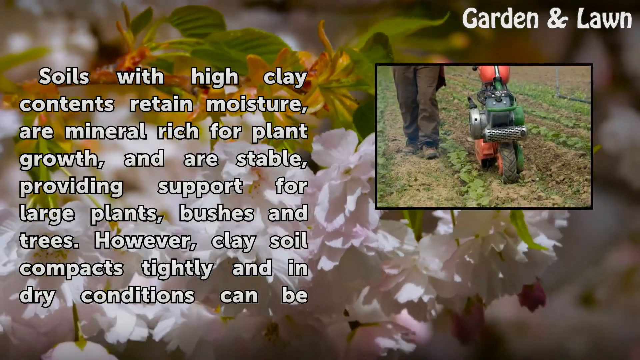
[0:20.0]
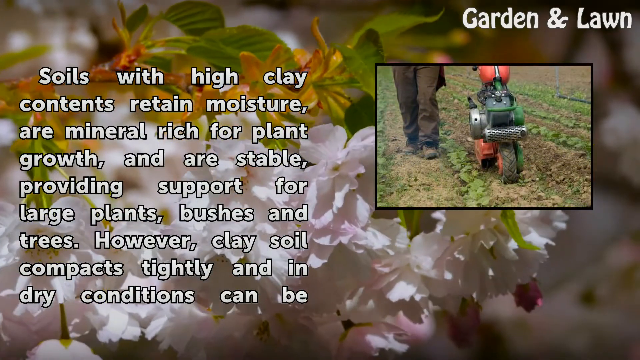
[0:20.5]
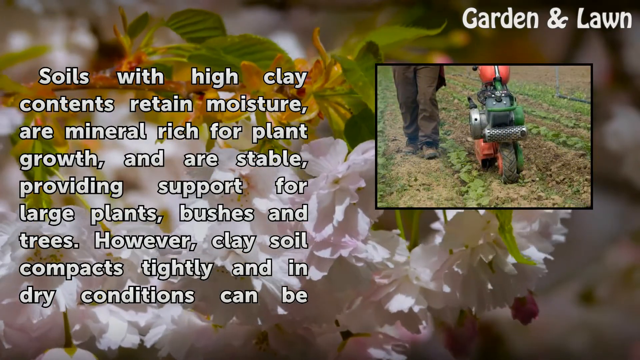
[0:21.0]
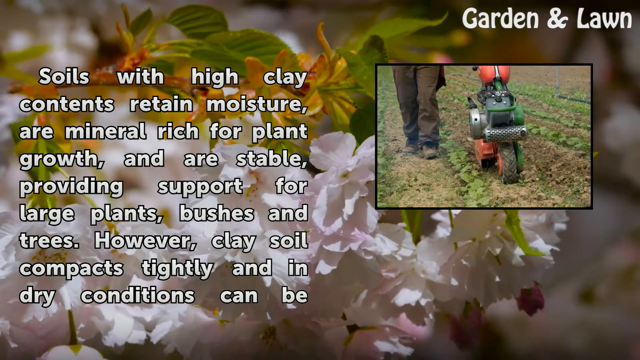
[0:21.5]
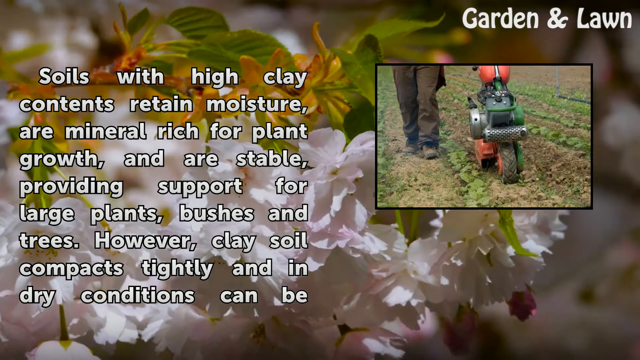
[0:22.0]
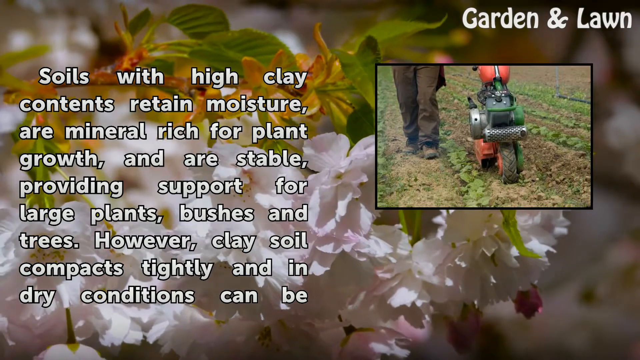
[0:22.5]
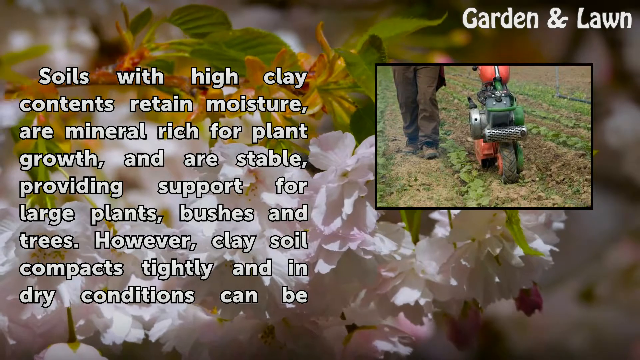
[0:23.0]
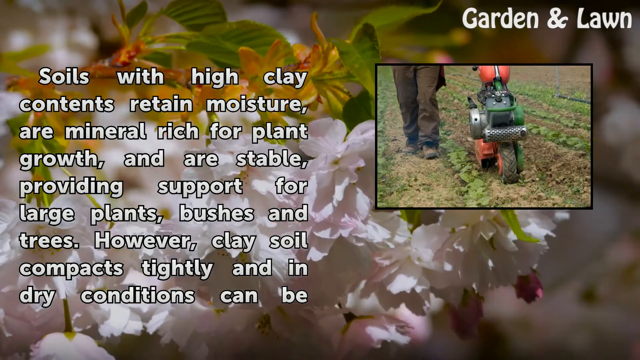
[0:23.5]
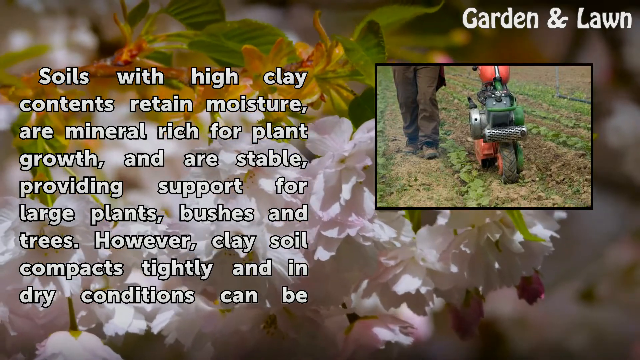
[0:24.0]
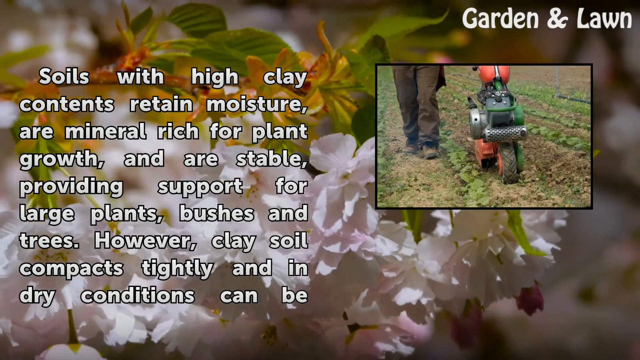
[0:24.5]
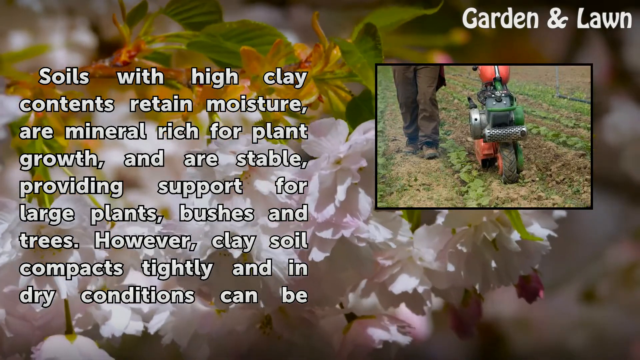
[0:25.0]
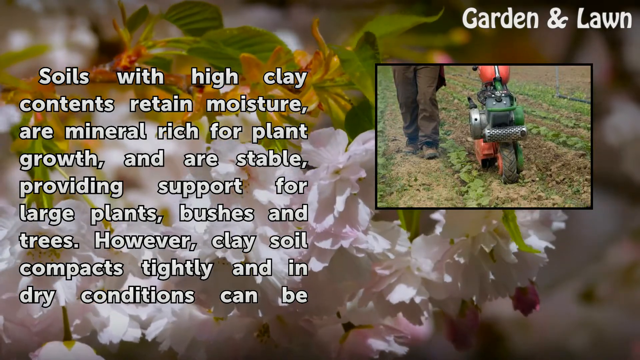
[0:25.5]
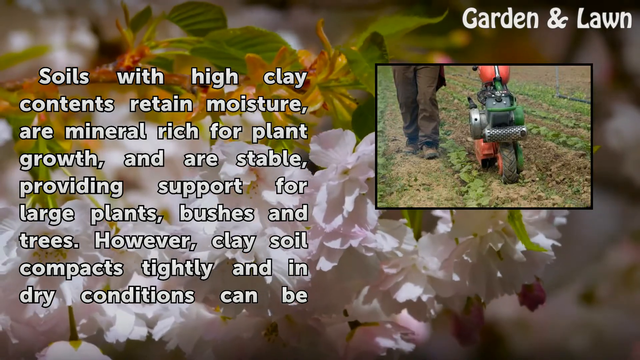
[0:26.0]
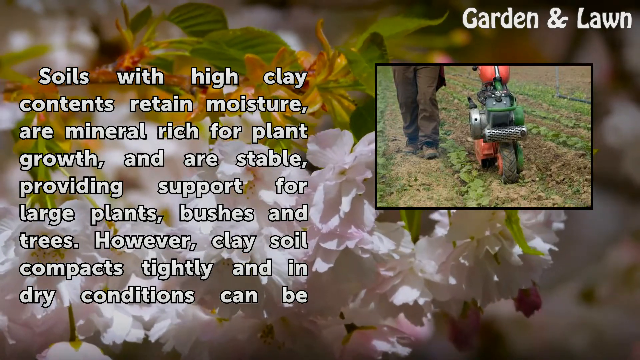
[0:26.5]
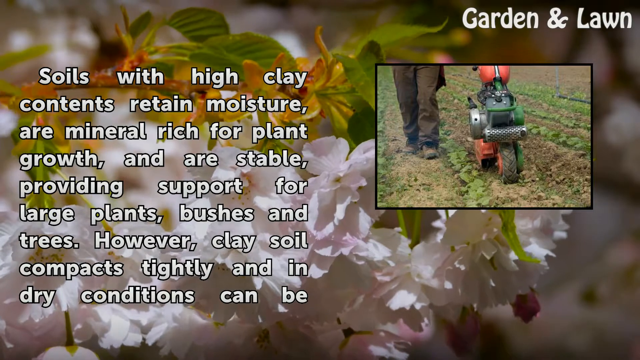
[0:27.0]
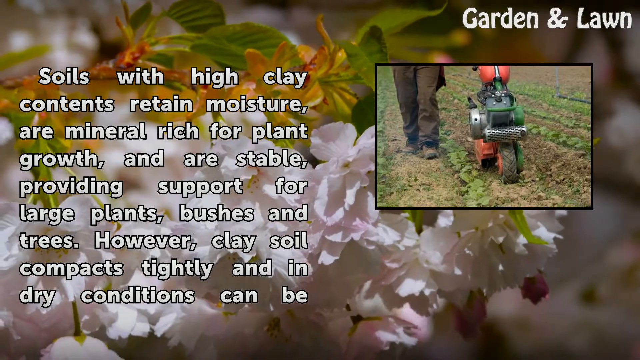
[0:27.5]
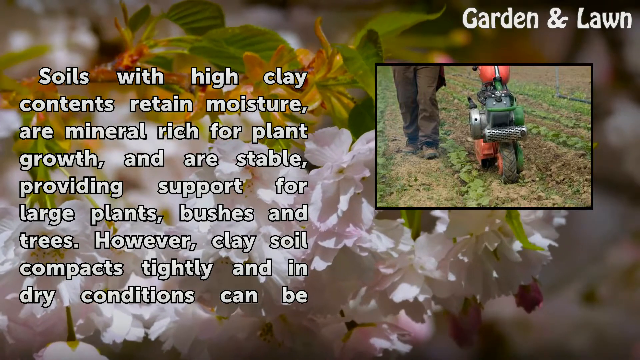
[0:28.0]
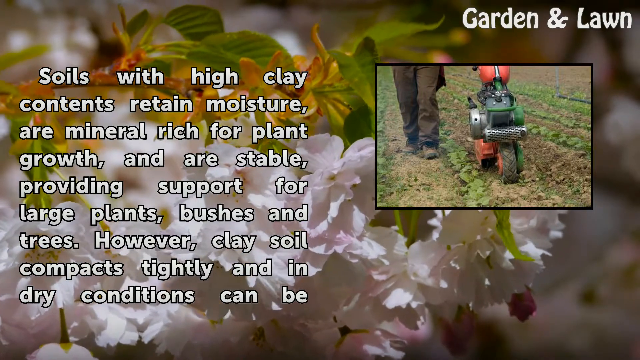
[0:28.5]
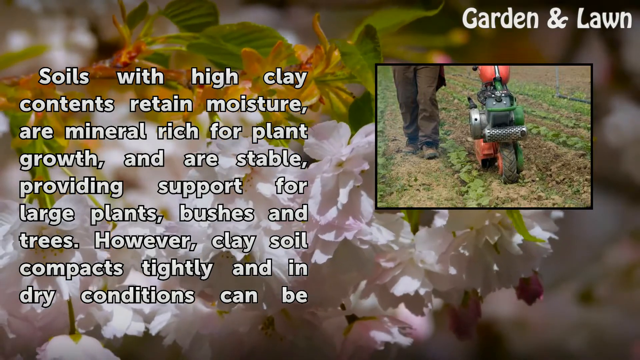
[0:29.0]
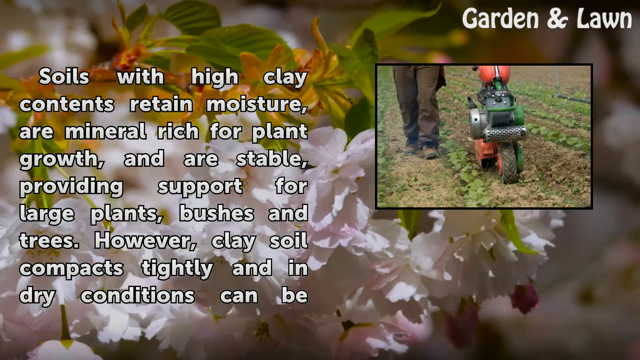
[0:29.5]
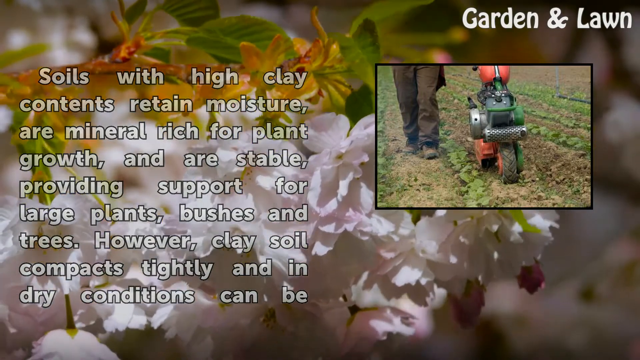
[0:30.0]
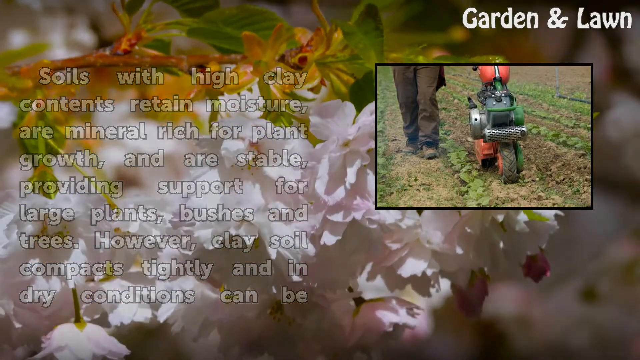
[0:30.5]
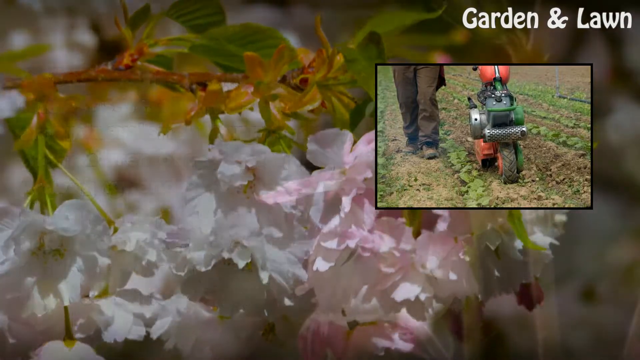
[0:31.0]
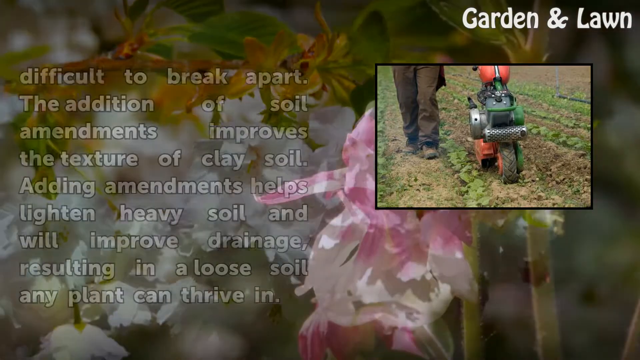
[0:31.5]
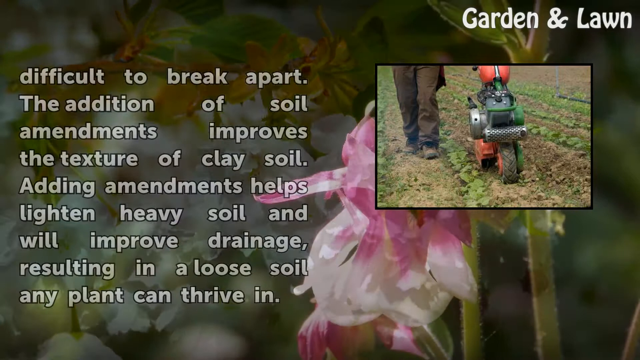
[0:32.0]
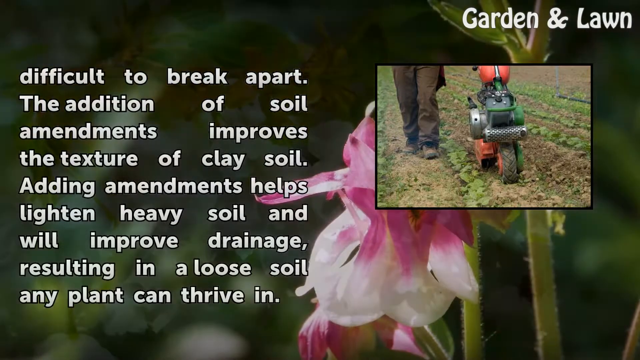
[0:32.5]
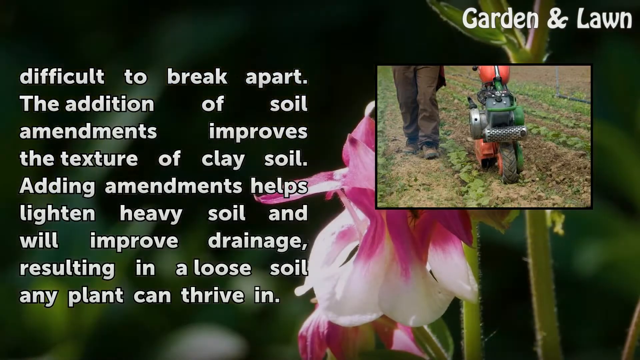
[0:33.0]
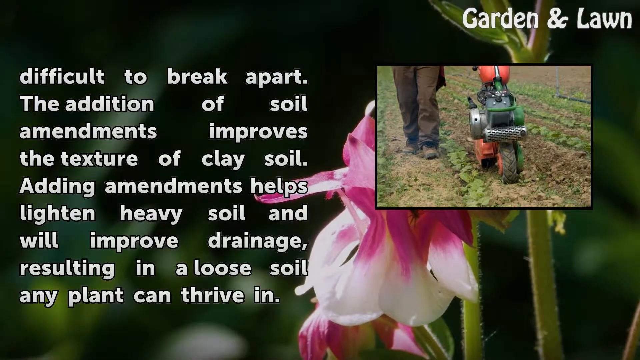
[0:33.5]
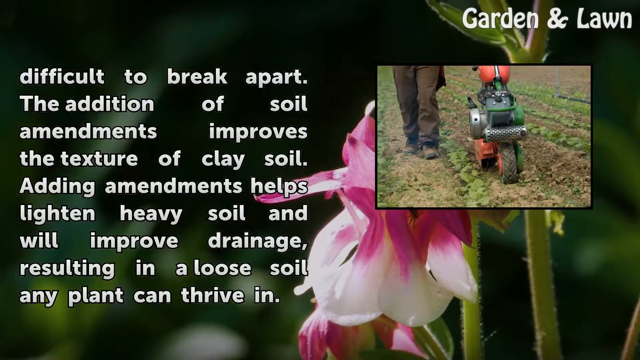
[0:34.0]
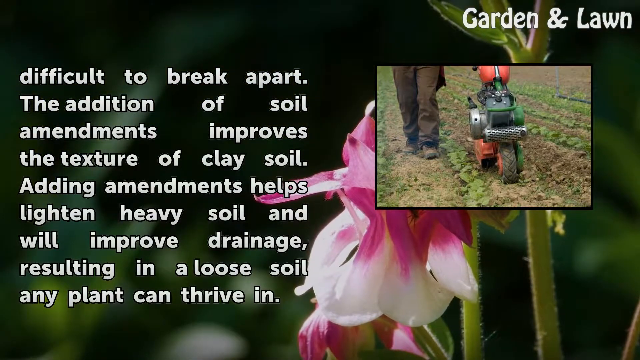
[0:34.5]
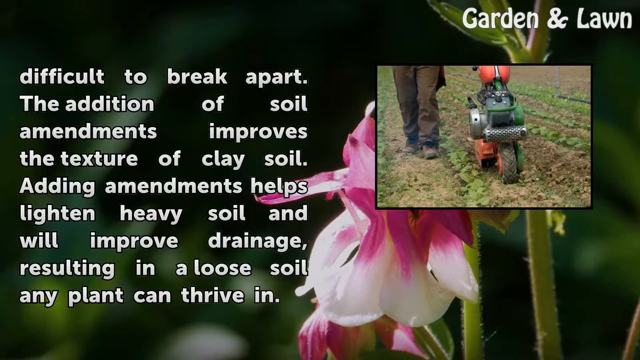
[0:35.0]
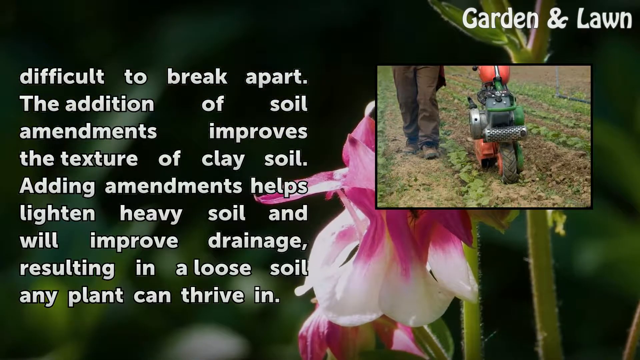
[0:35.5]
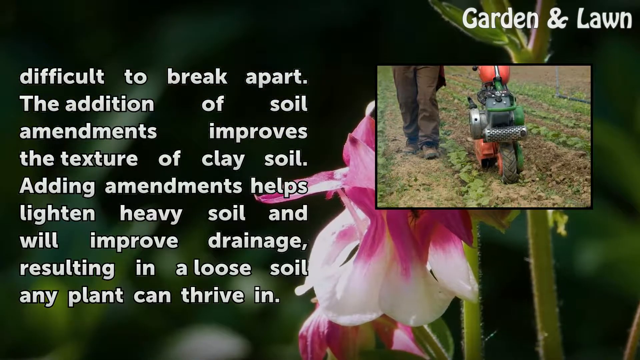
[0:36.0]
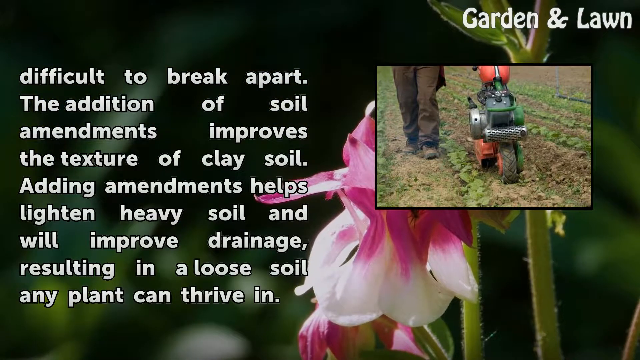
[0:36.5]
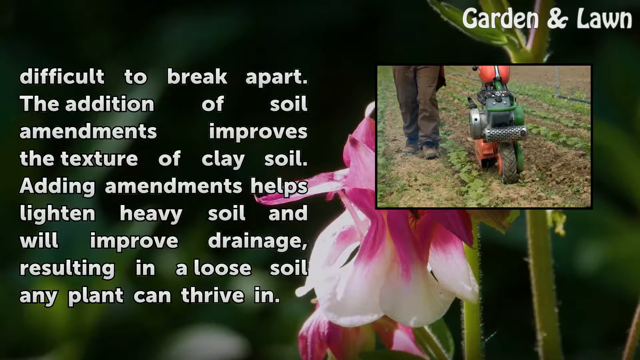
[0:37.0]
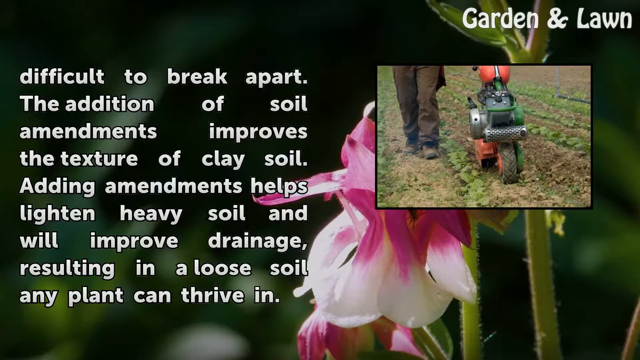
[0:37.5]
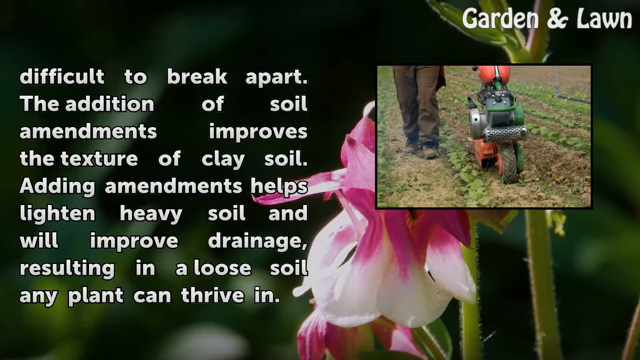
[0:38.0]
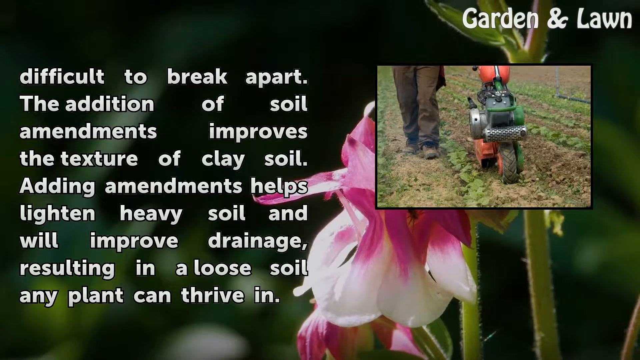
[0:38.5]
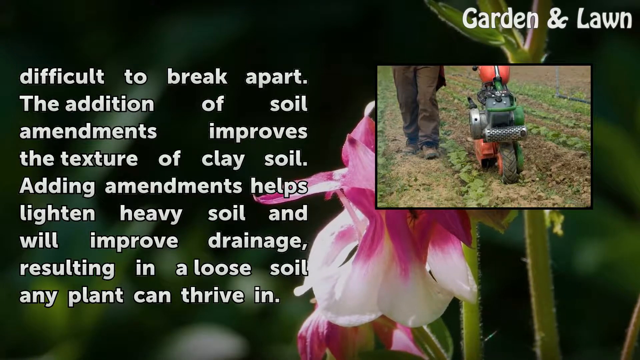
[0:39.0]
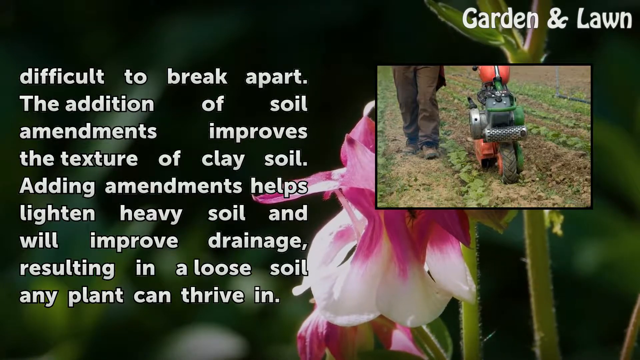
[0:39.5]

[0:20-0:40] The same screen continues, with the text on the left-hand side and, on the right-hand side, a photograph of some sort of contraption with a small tyre, a motor above it, and something at the back that maybe cuts; it looks like a very elaborate lawnmower. The bottom of somebody's legs can be seen pushing it along, making a slight furrow as it goes. The text "however clay soil compacts tightly and in dry conditions can be" slowly fades away, and new white text slowly fades into view: "difficult to break apart. The addition of soil amendments improves the texture of clay soil. Adding amendments helps lighten heavy soil and will improve drainage, resulting in a loose soil any plant can thrive in." The machine apparently adds amendments to the soil. As the text is shown, the flower backdrop changes to what appears to be a lily-type flower, purple and white, partly obscured by the photograph of the machinery. The flower has a stem coming off to the side. It is a moving picture, gently blowing left and right in the wind very slowly.